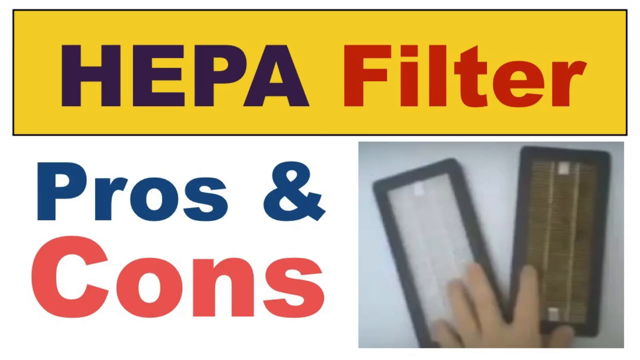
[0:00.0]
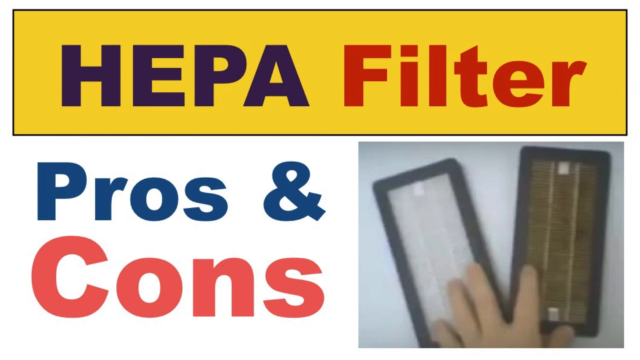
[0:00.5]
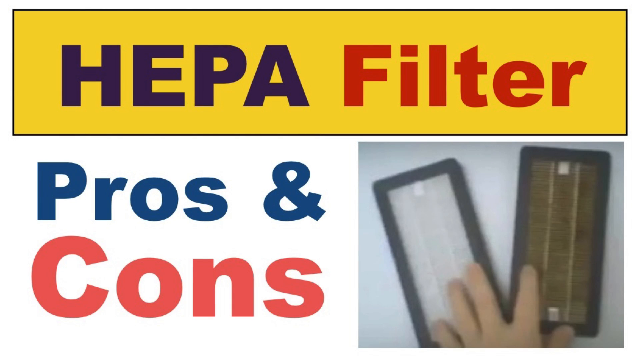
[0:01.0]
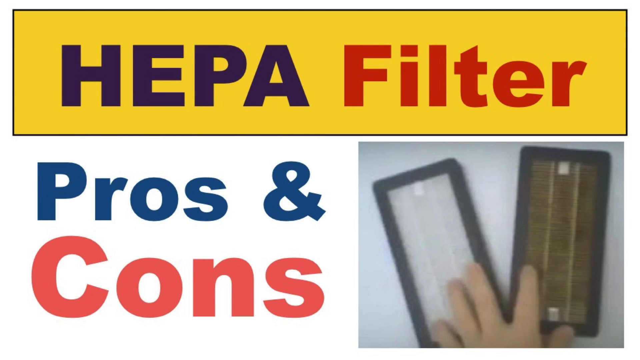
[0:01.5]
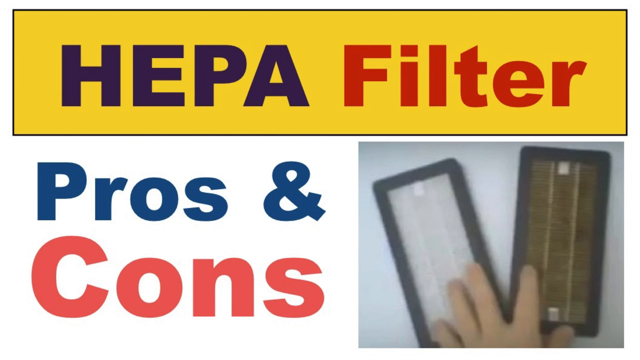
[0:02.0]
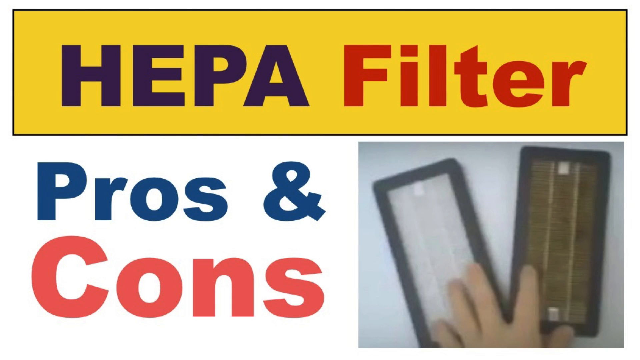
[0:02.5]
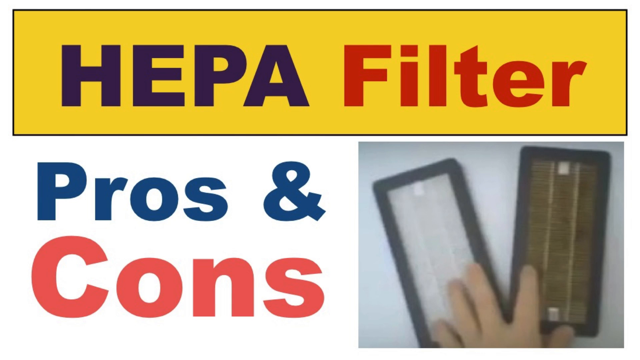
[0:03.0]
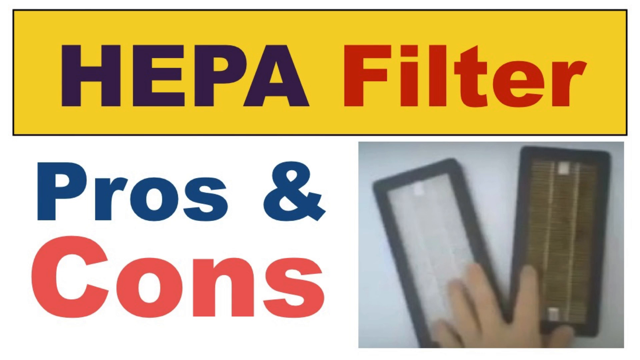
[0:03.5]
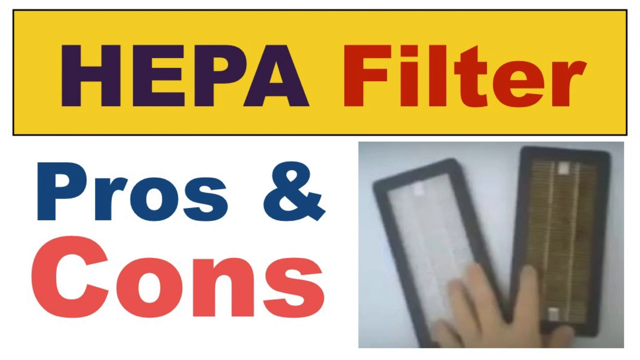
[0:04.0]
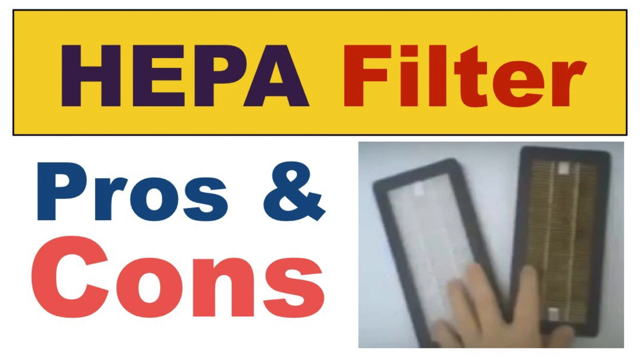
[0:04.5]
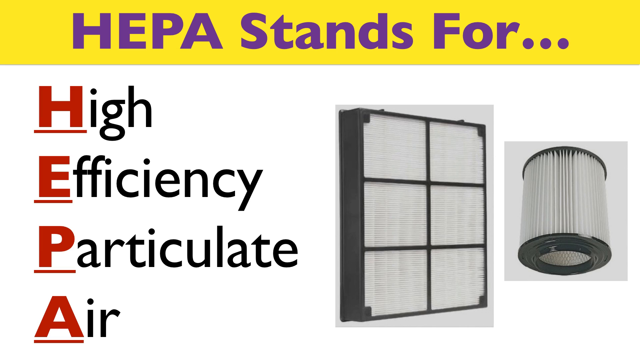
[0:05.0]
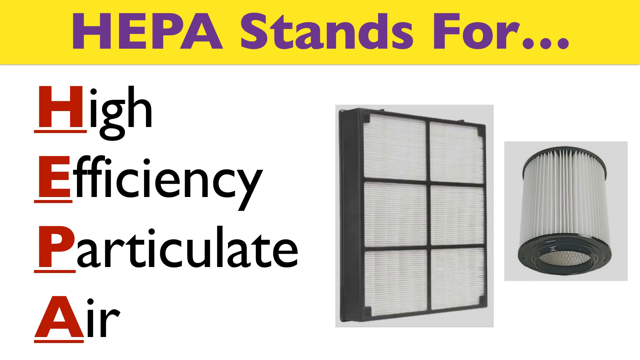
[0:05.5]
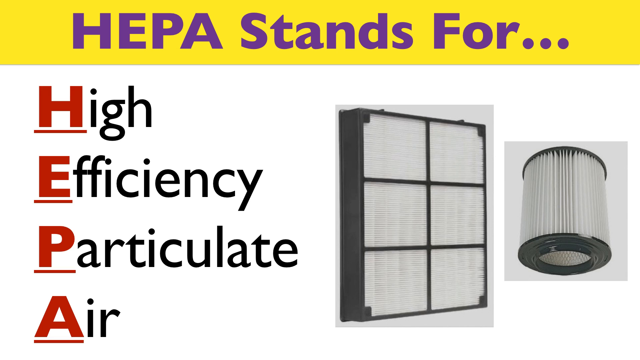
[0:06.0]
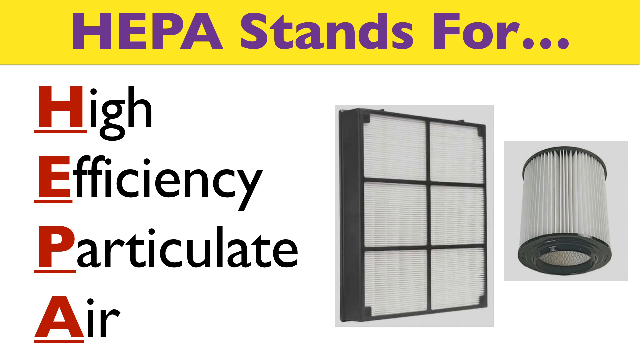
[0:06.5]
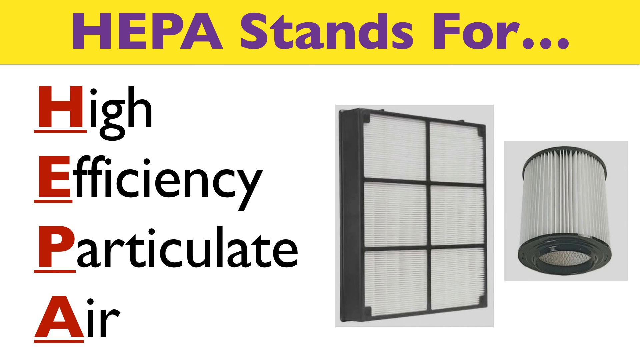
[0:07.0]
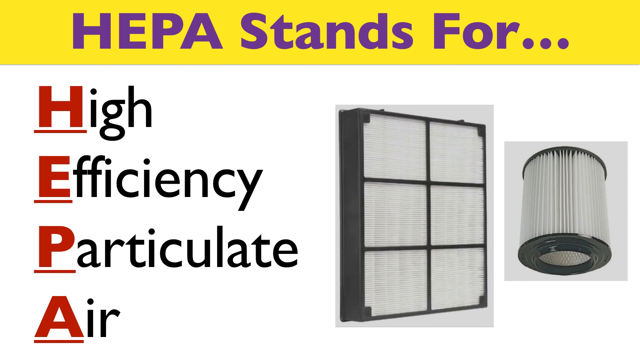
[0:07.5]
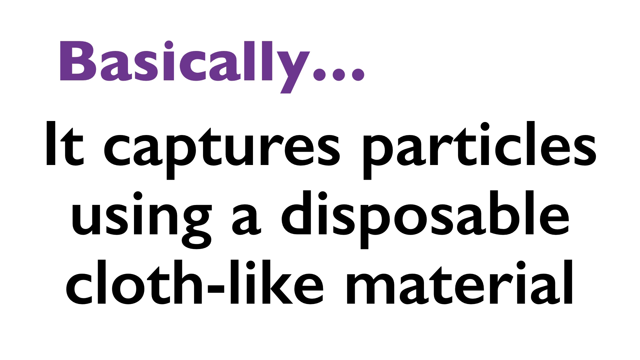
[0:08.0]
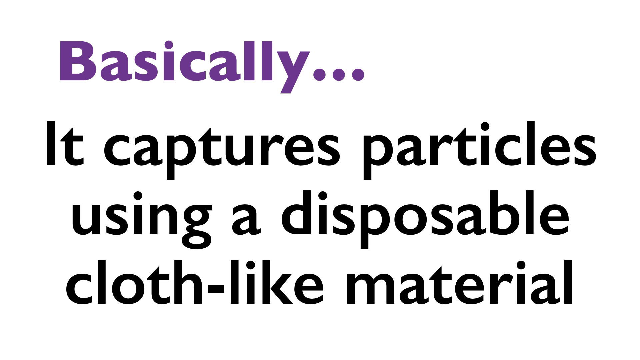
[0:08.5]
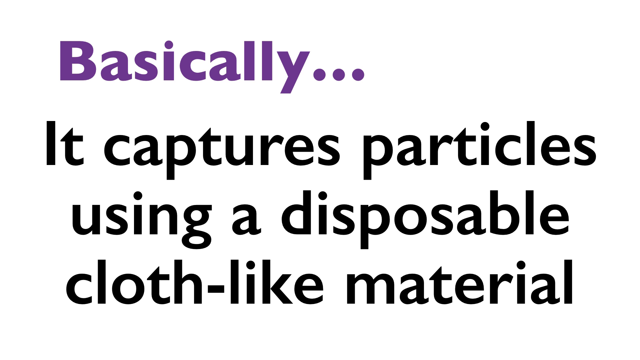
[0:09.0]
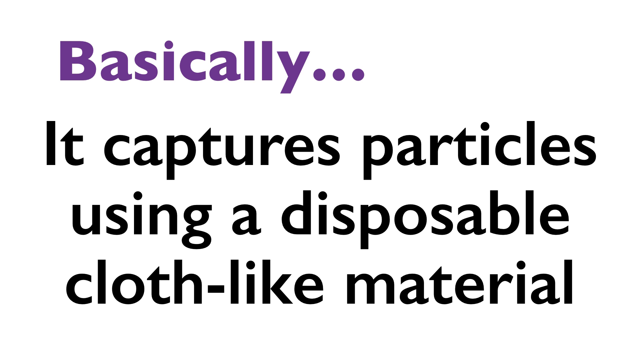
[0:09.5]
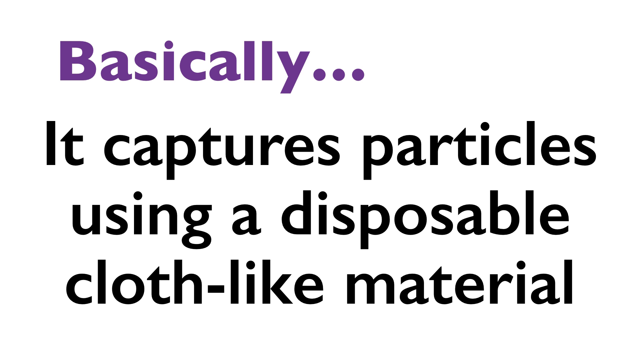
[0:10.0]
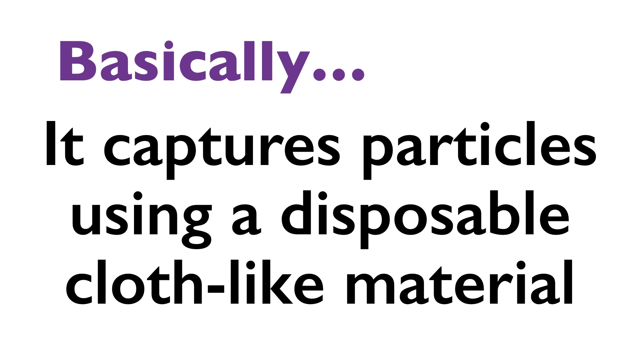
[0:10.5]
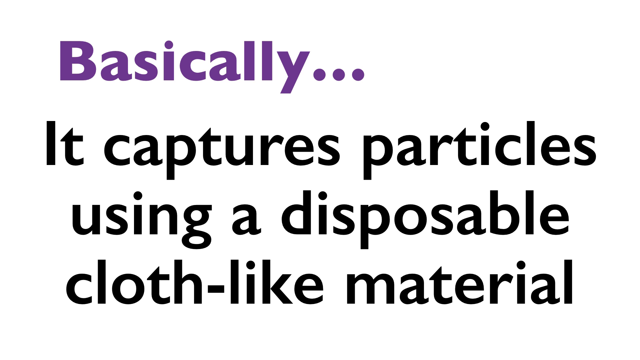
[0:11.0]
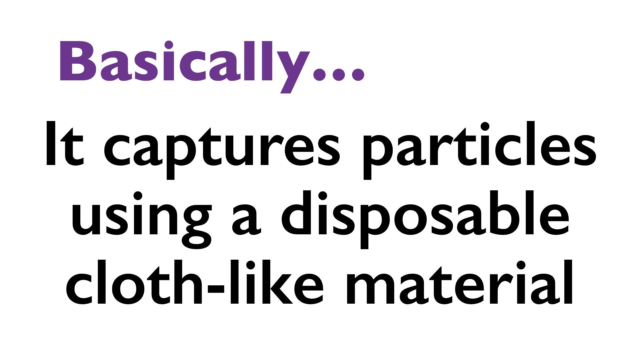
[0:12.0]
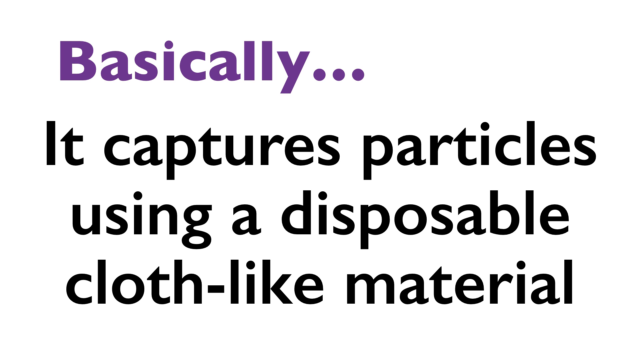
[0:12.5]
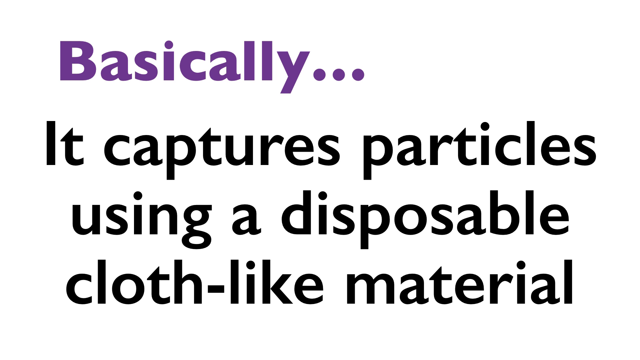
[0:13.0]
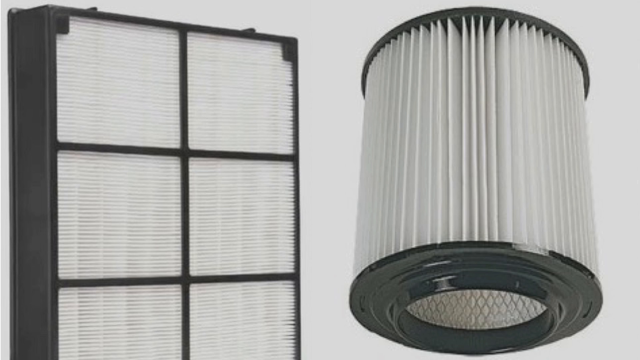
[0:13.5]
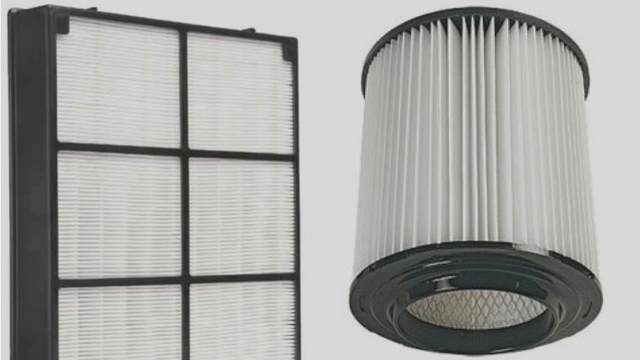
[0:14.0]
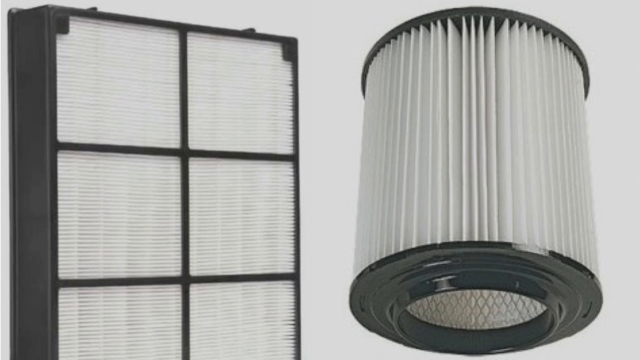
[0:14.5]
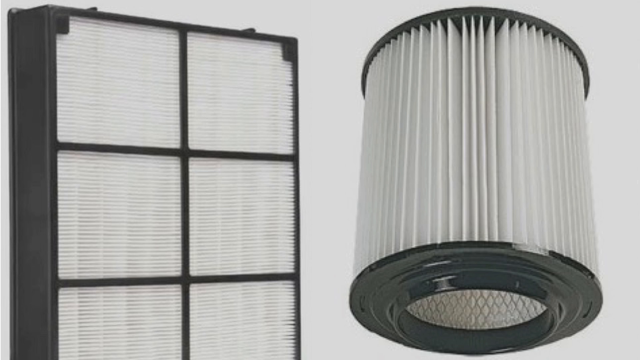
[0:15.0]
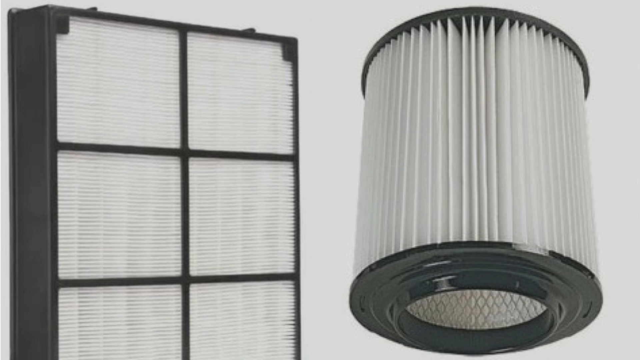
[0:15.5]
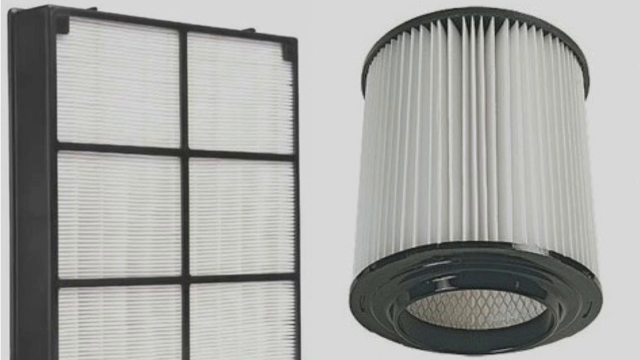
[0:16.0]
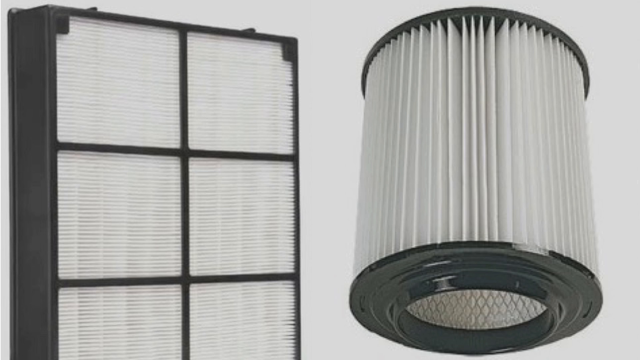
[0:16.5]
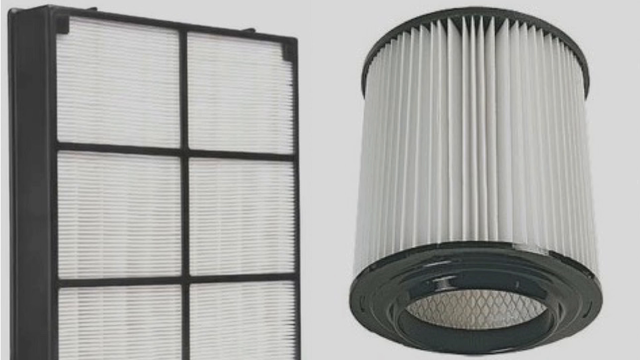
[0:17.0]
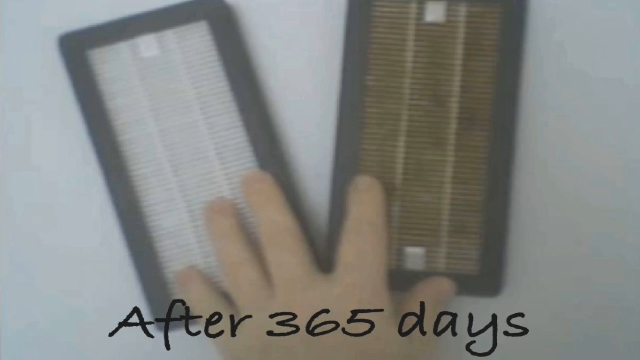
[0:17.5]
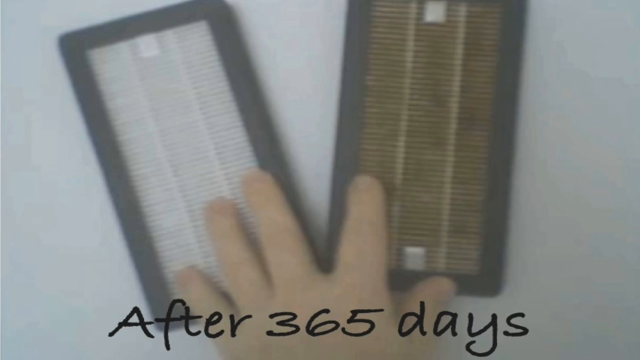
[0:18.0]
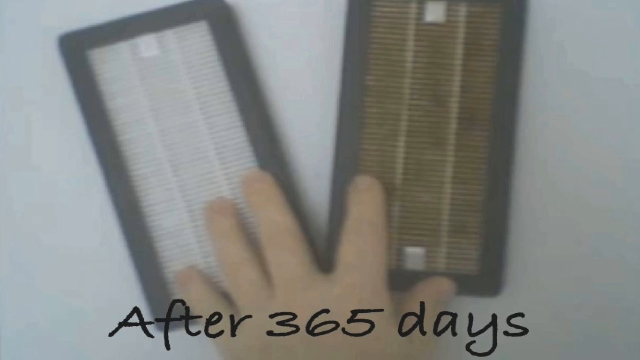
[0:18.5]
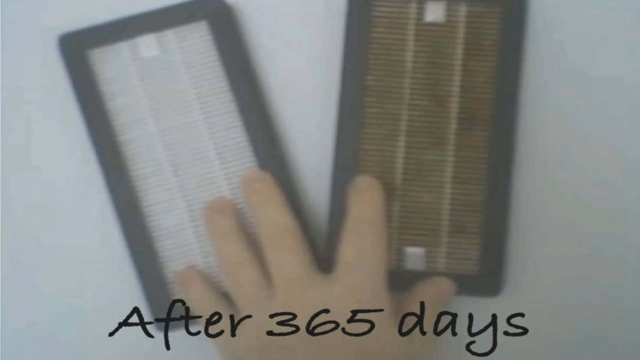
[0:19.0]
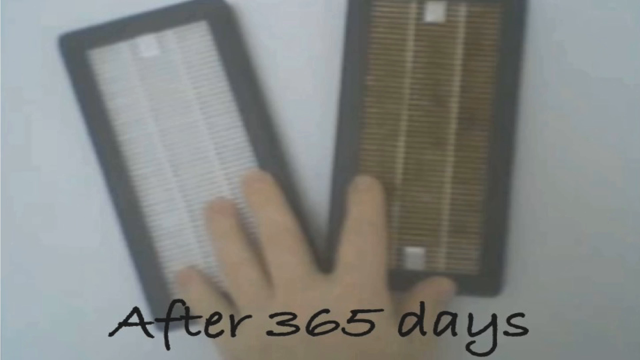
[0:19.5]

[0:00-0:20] The video opens on a title card for HEPA filter pros and cons. "HEPA filter" is at the top of the screen in a yellow box with a black outline, "pros and cons" is in the bottom left-hand half, and the right-hand half holds a photograph of two HEPA filters being held down, one clean and one dirty. The index finger of someone's left hand is on the dirty one and the other three fingers of someone's left hand are on the clean one. The title card stays for approximately four seconds. Next comes what looks like a PowerPoint slide with "HEPA stands for" in purple text on a yellow background at the top, and "High Efficiency Particulate Air" on the left, each initial letter in red and underlined in red. The right-hand half shows two other HEPA filters: a square one with six small squares on it and a circular one with fins. Another slide has purple text at the top and at the bottom, with "It captures particles using a disposable cloth-like material" in title case and centrally justified. The two HEPA filters from earlier then appear: a rectangular one with six square sections, basically a filter with fins, which is white and sitting in a black colored tray, and to the right of it a circular filter like one seen in a vacuum cleaner, with fins and a plastic ring at the bottom and the top. Then comes a fairly blurred photograph of two rectangular HEPA filters, one clean and one dirty. The clean one is held down by three fingers of the left hand, the little, ring and middle fingers, and points at sort of 11 o'clock; the dirty one is on the right, pointing at about one o'clock, held in place by the index finger and thumb of the right hand. Text at the bottom reads "after 365 days".